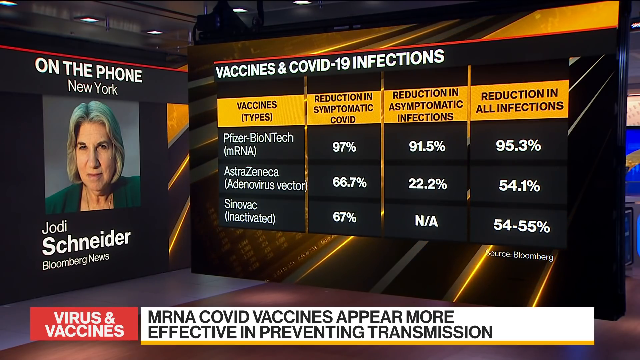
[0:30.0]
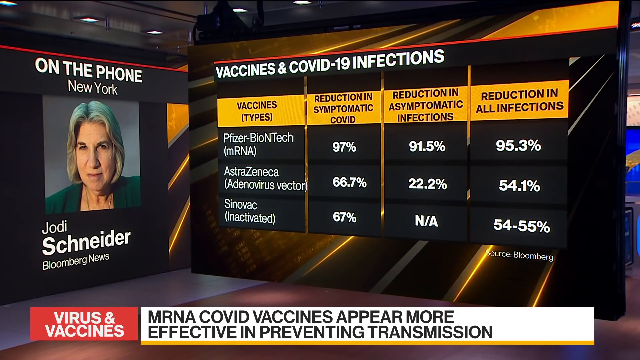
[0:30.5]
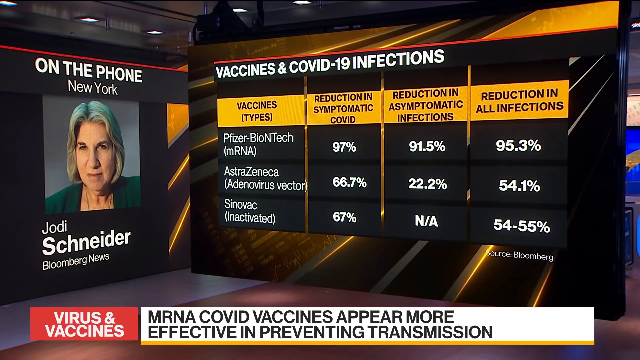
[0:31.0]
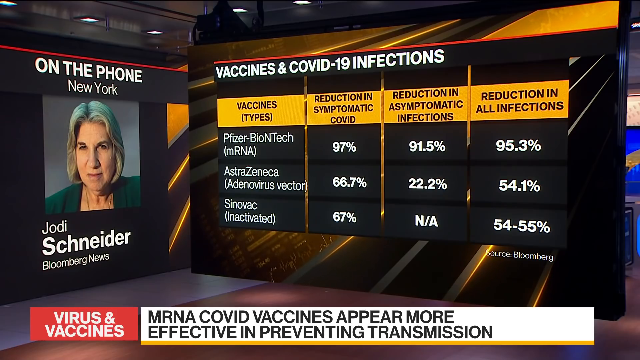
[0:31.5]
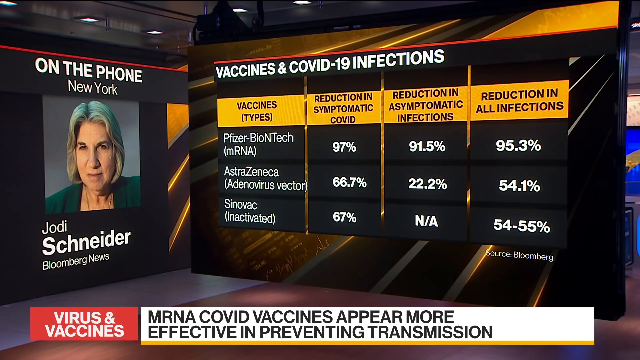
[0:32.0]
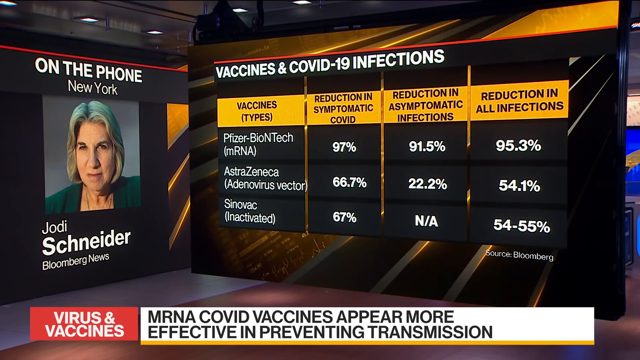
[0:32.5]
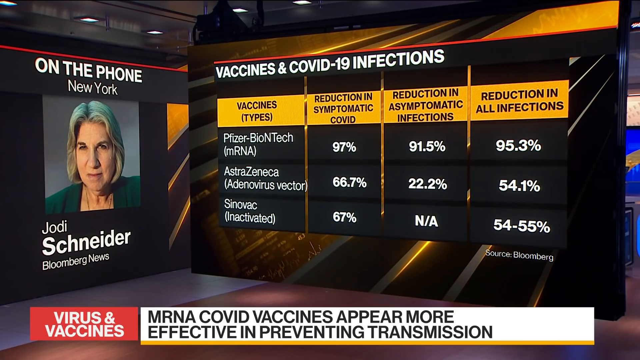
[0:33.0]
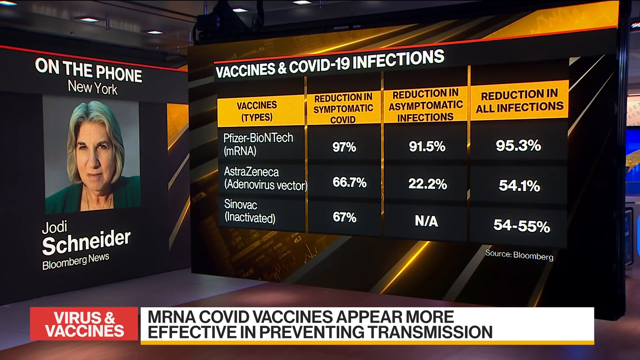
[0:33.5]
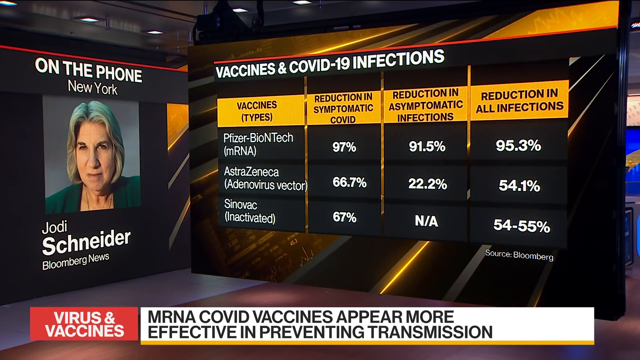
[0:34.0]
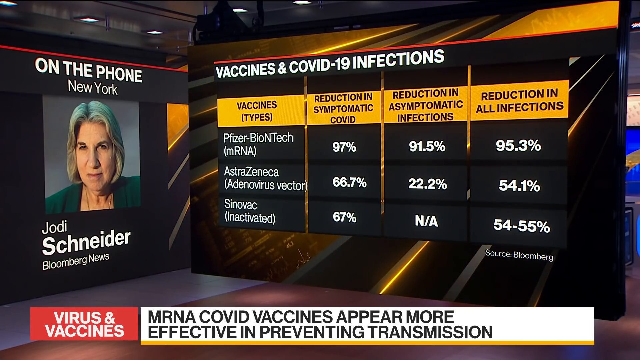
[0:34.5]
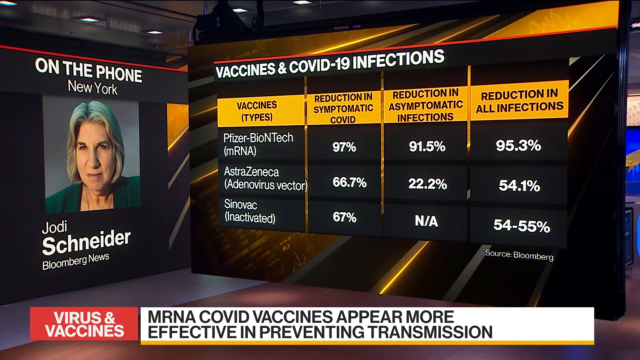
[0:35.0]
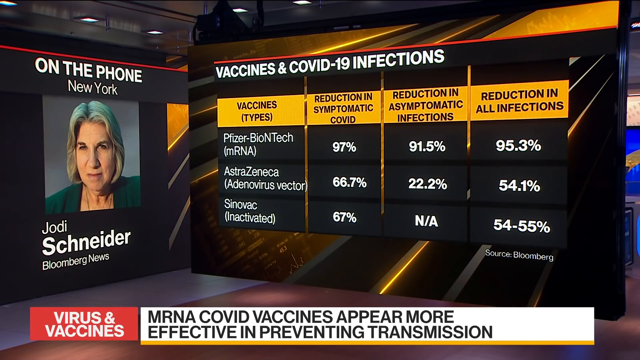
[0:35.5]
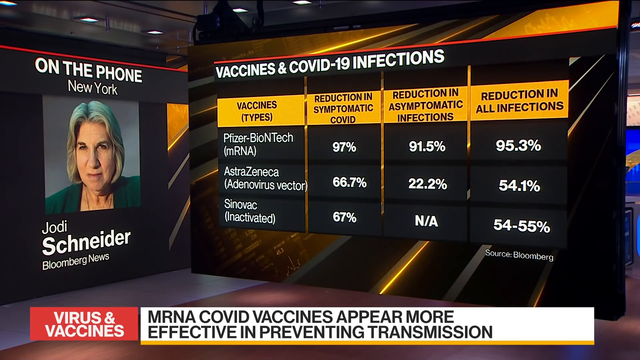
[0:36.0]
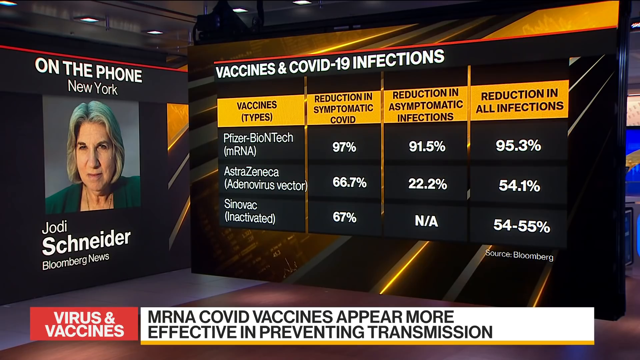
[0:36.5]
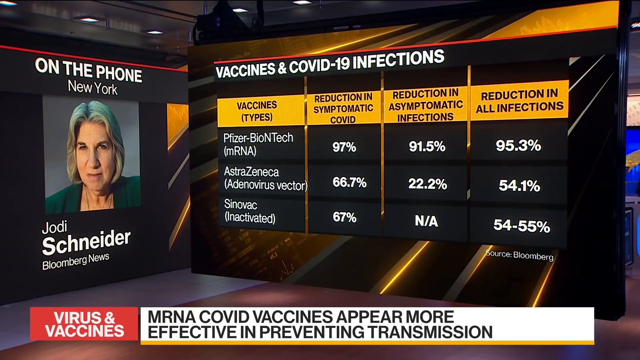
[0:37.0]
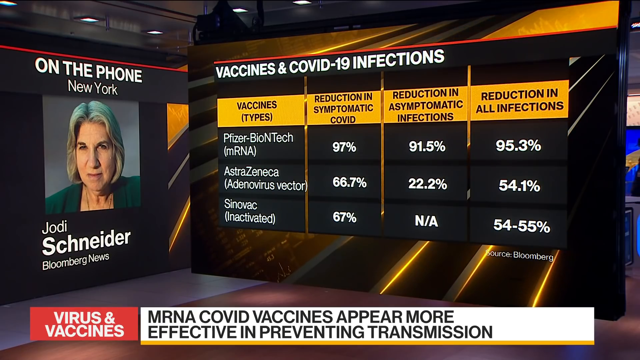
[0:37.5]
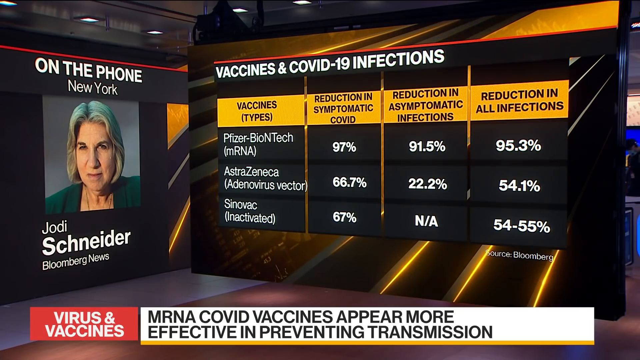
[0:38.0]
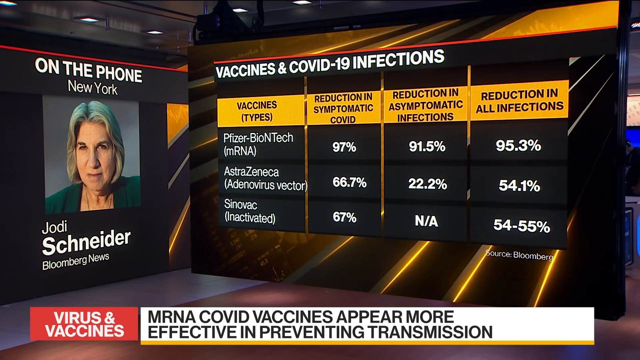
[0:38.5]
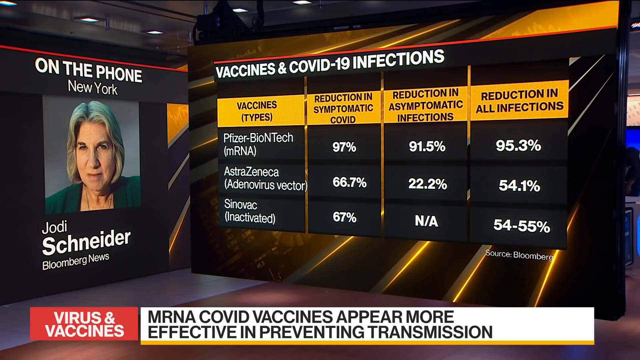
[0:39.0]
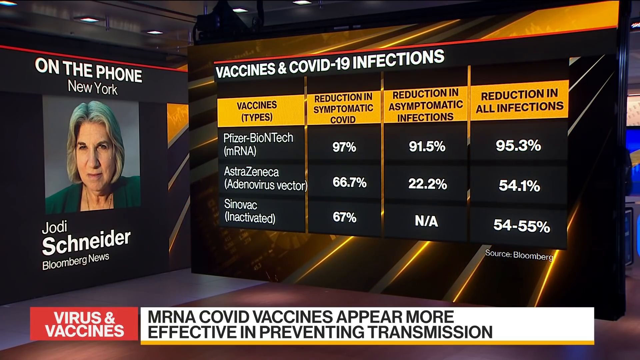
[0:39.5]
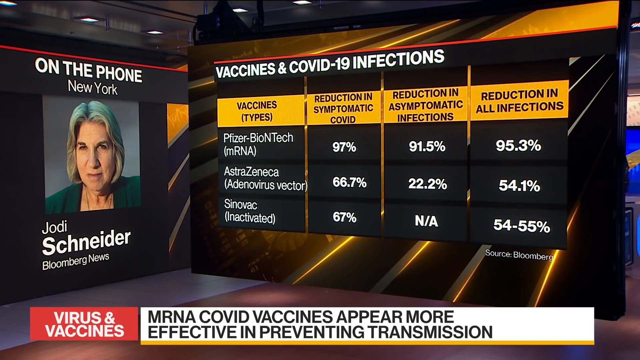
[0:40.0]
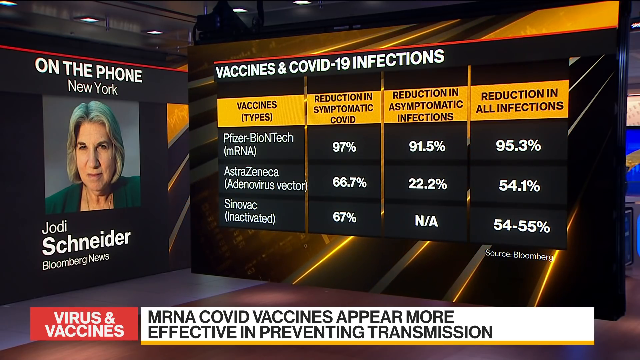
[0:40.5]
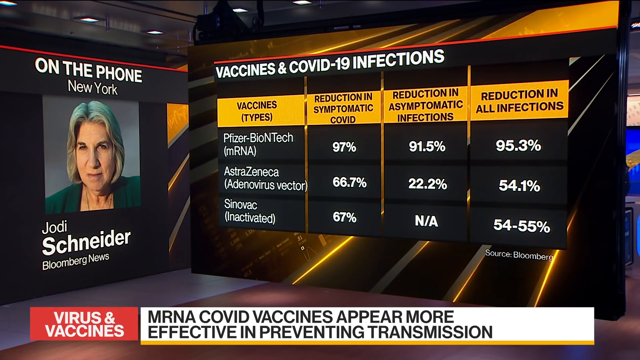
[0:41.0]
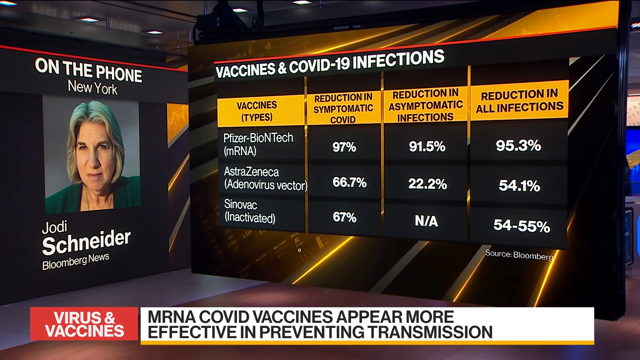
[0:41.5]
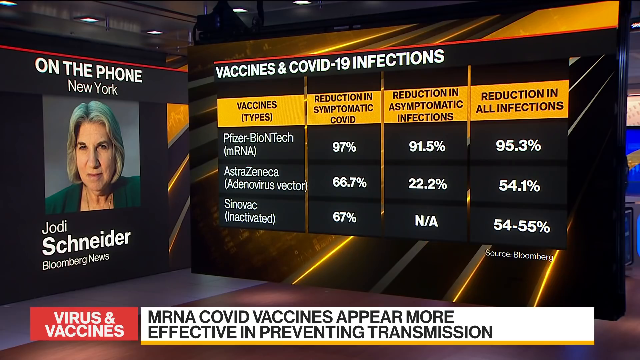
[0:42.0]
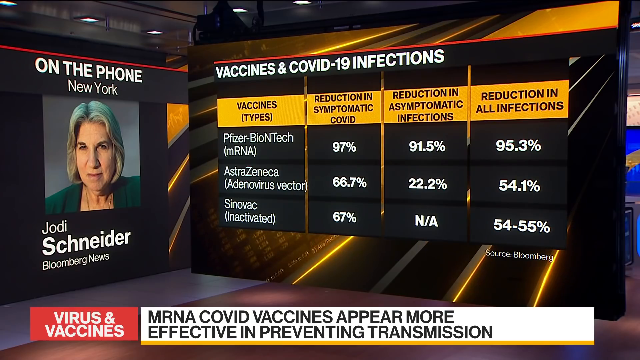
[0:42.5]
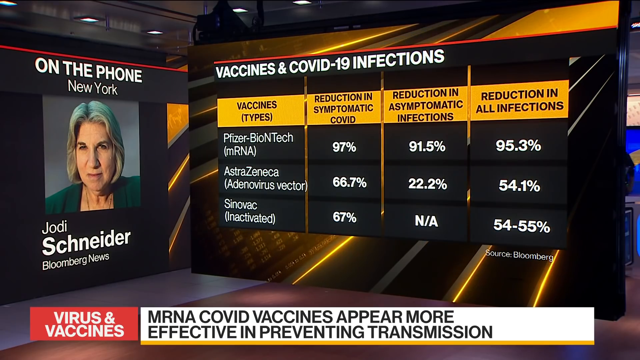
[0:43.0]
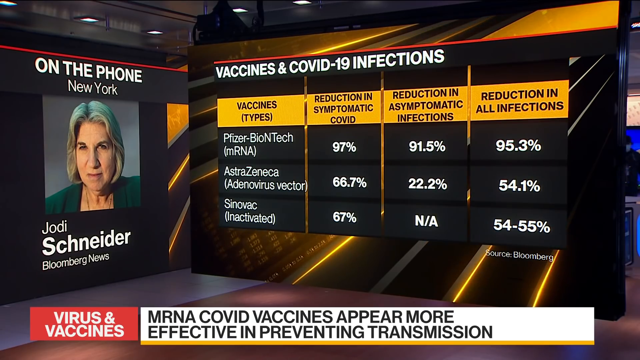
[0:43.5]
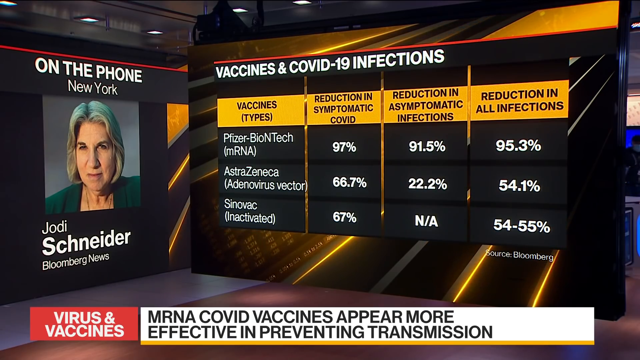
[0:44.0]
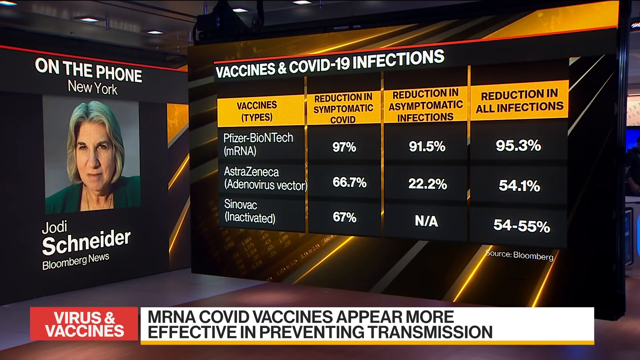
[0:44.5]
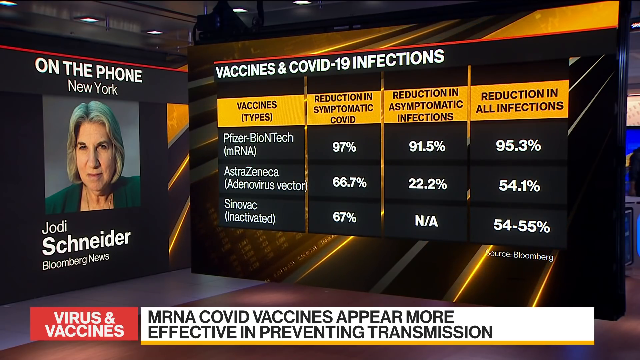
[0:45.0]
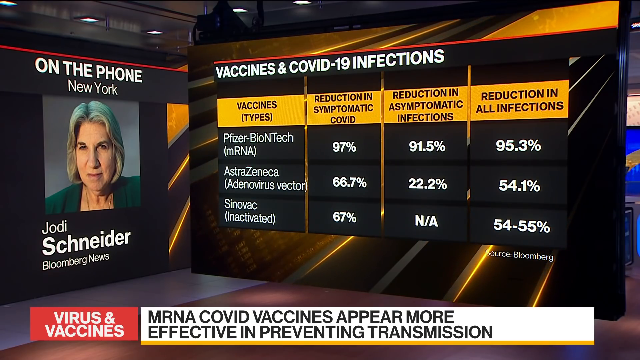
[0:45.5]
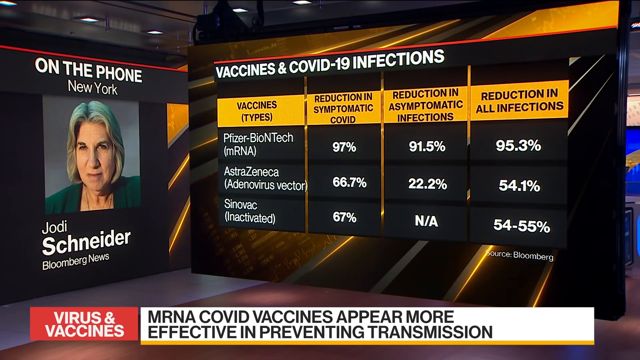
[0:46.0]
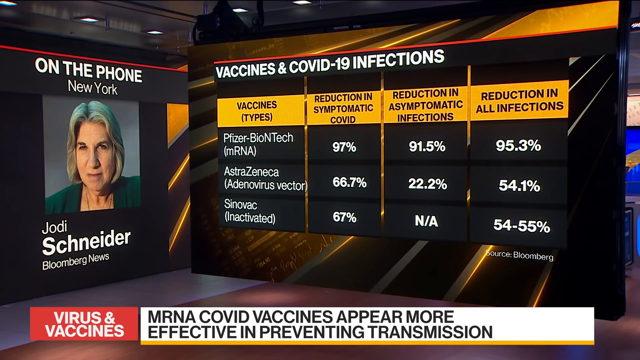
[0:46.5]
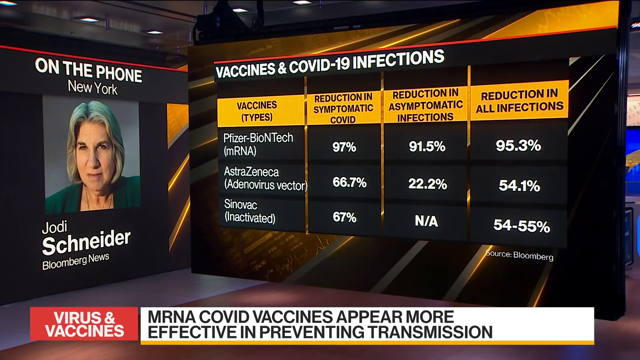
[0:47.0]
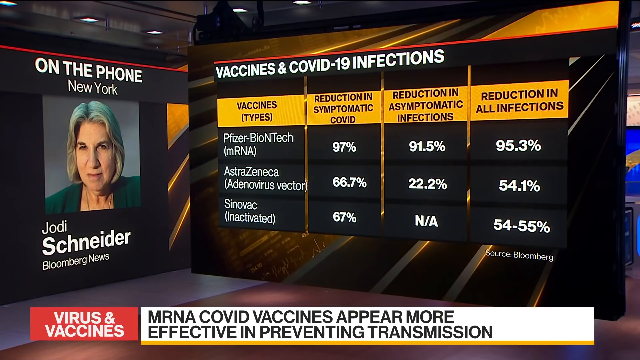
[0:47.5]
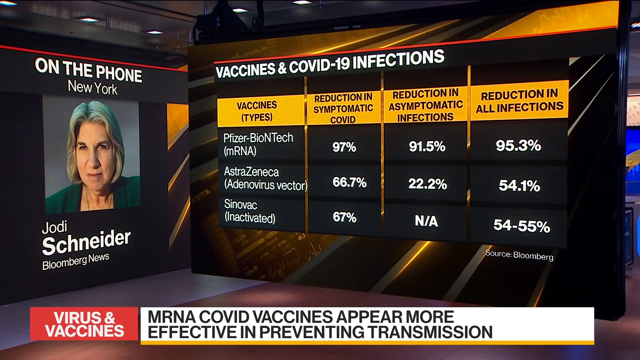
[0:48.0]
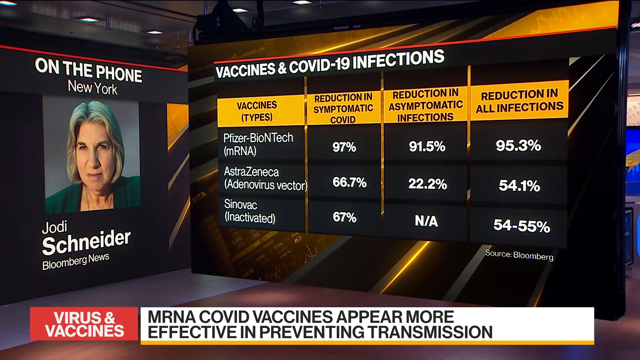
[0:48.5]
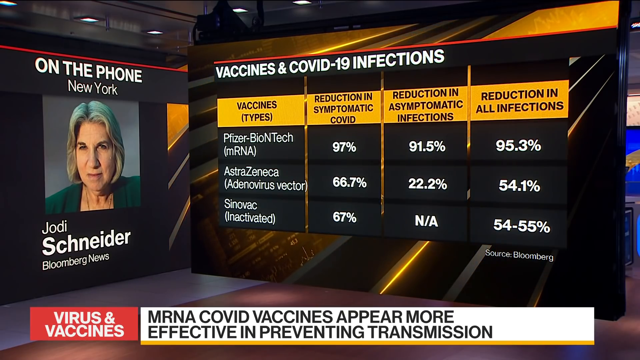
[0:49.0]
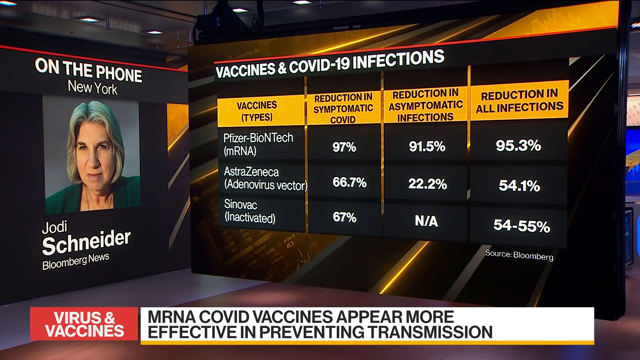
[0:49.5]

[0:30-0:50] The same header remains at the bottom of the screen: "mRNA COVID vaccines appear more effective in preventing transmission." The comparison of vaccine types continues, with Pfizer shown as the most effective of the group according to Bloomberg. The words on screen are white; the vaccine types are in black boxes, and the symptomatic, asymptomatic and reduction sections are in yellow boxes. A picture of Jody is shown to indicate that she is on the phone from New York. She is a Caucasian woman who looks older, maybe in her 60s or 70s, wearing what looks like a green dress and a blazer, with jewelry around her neck.